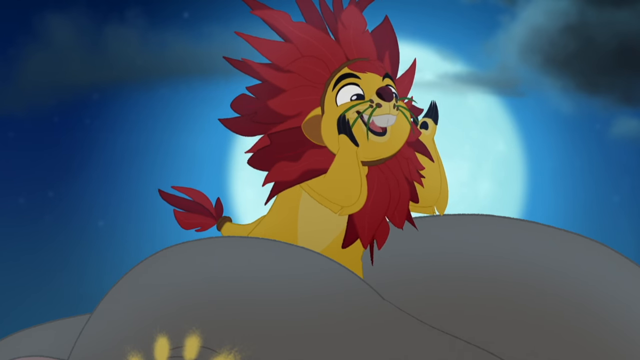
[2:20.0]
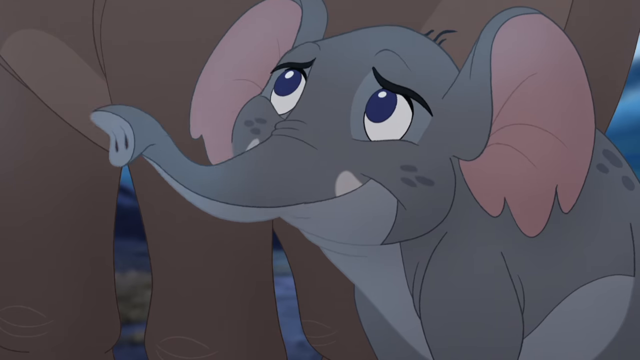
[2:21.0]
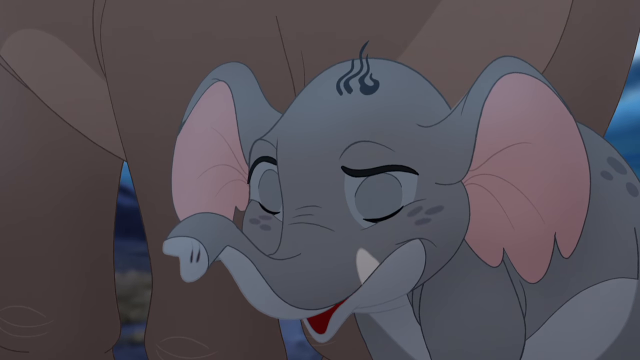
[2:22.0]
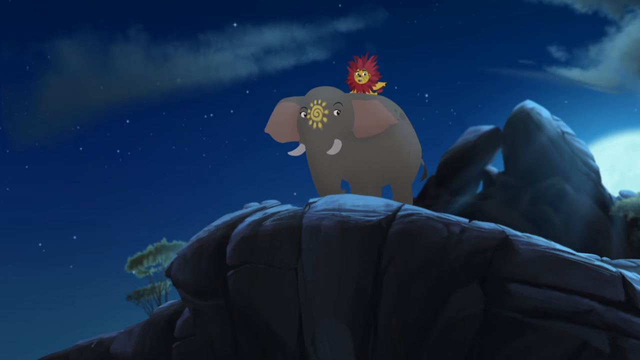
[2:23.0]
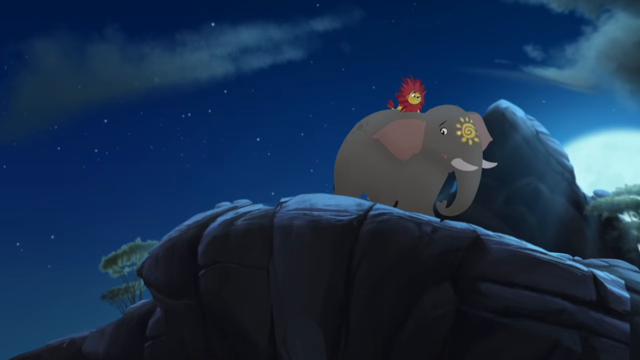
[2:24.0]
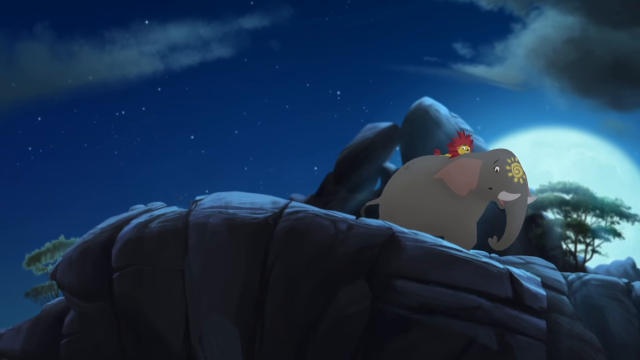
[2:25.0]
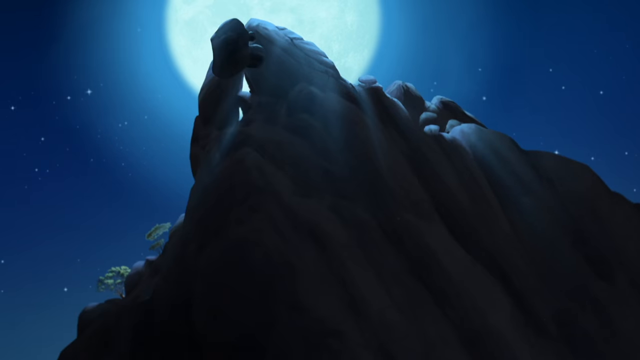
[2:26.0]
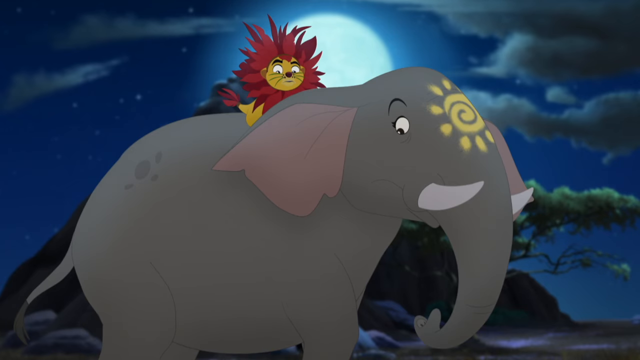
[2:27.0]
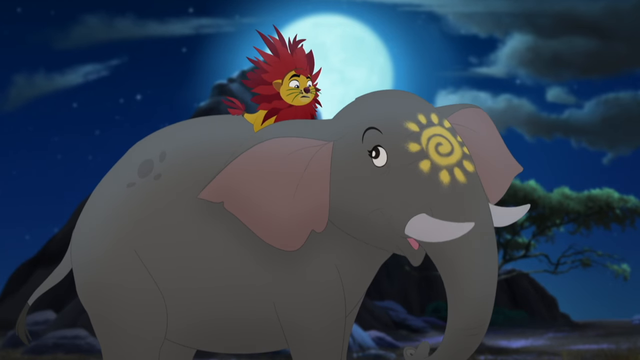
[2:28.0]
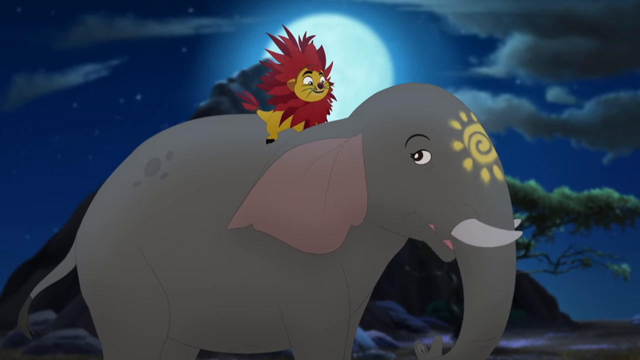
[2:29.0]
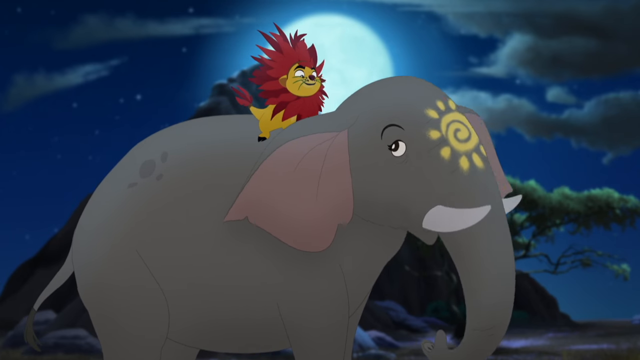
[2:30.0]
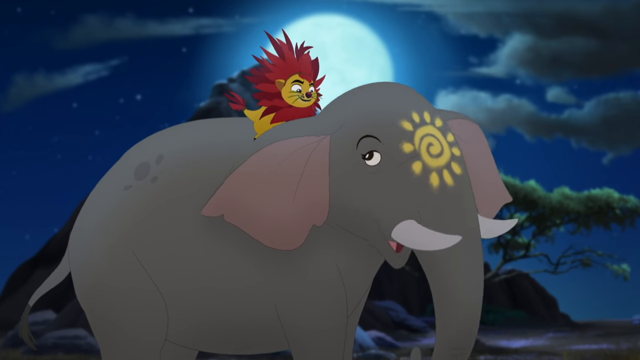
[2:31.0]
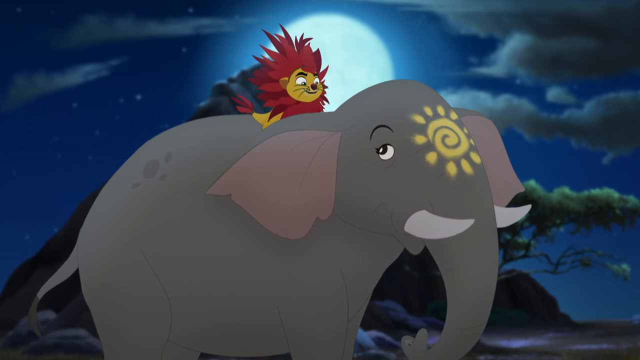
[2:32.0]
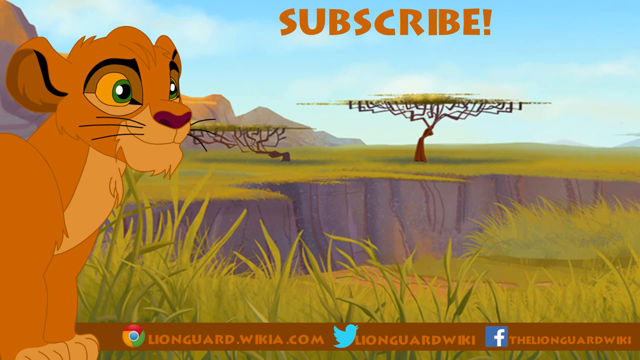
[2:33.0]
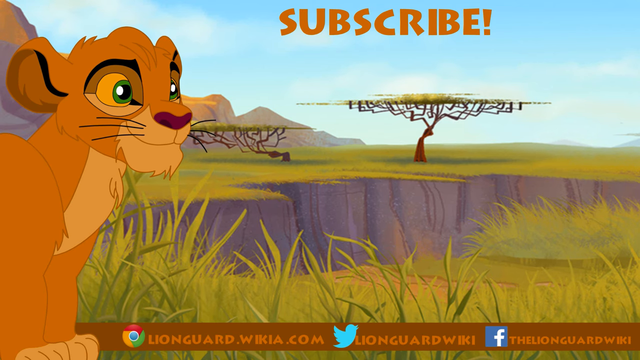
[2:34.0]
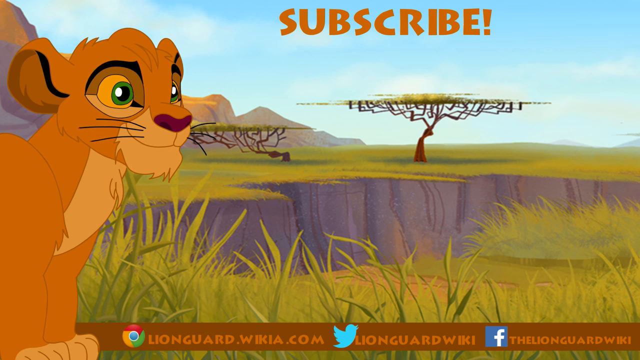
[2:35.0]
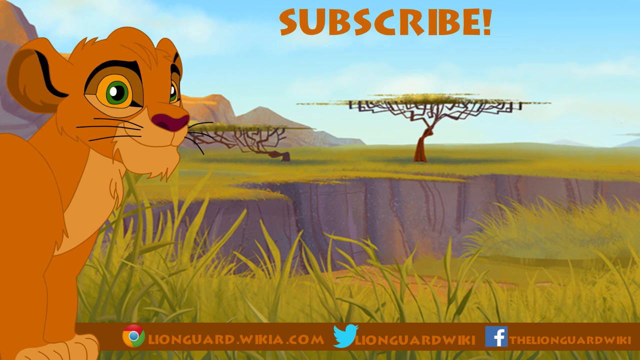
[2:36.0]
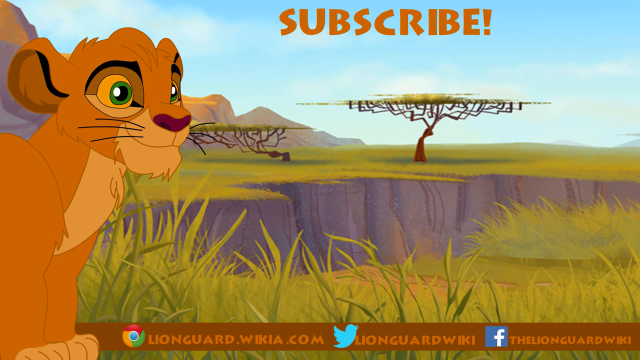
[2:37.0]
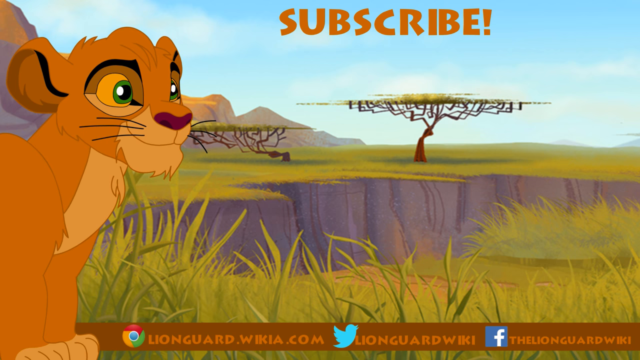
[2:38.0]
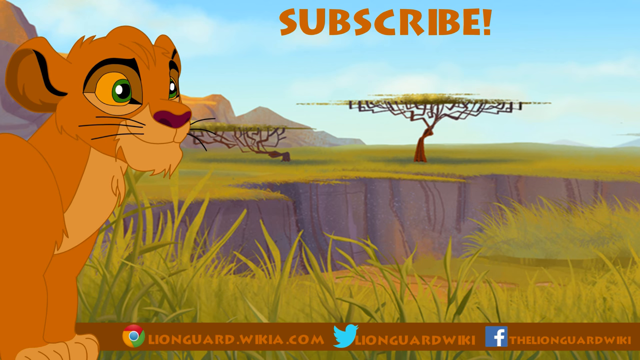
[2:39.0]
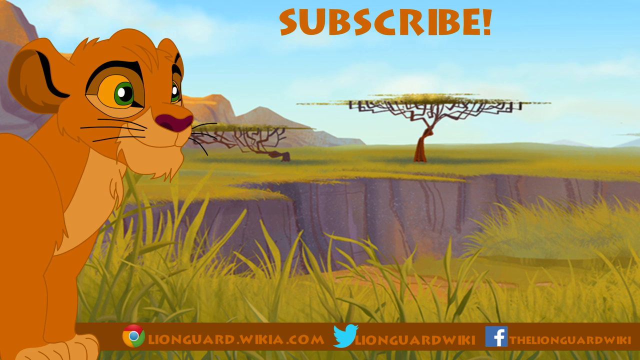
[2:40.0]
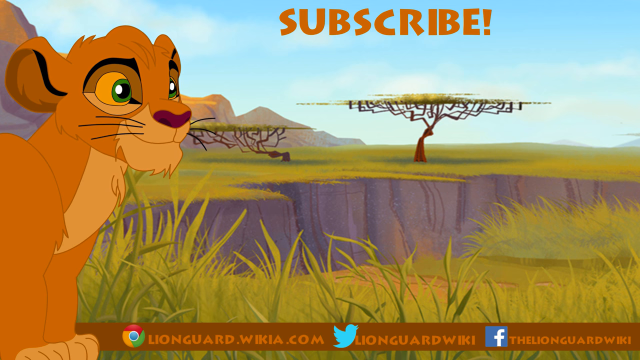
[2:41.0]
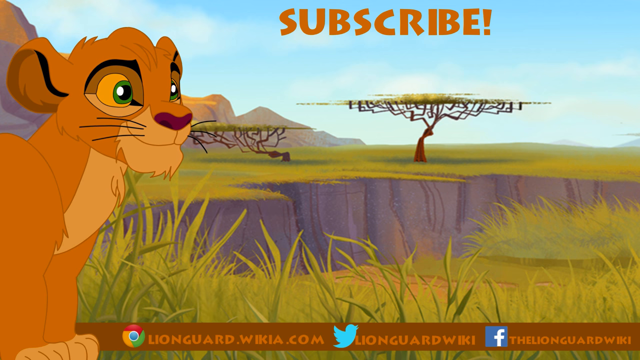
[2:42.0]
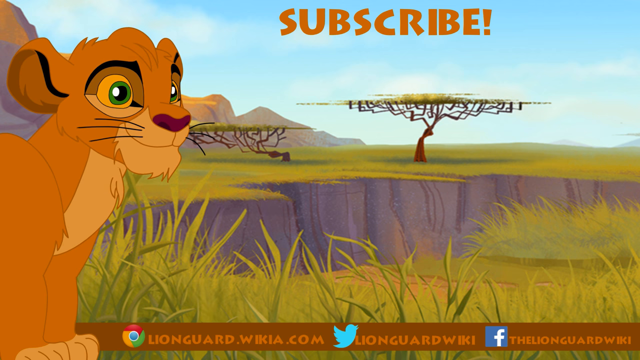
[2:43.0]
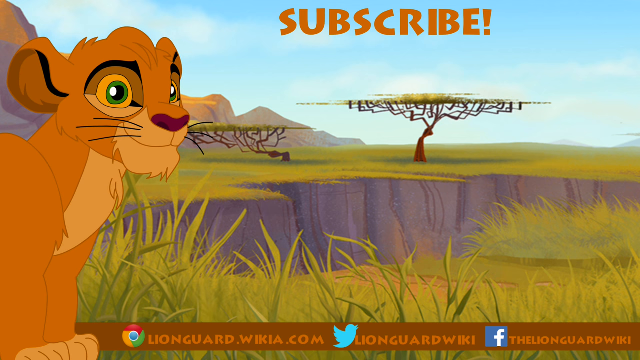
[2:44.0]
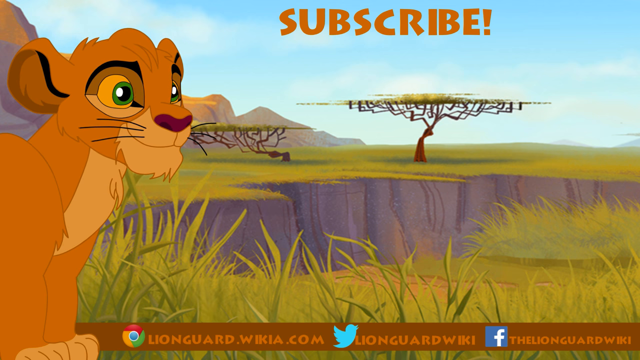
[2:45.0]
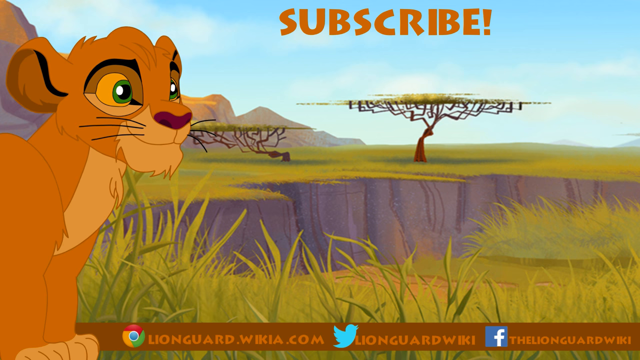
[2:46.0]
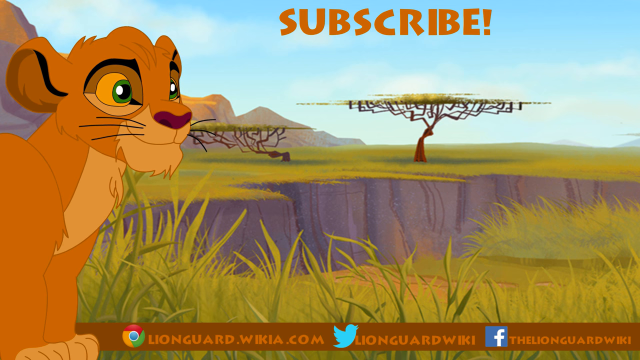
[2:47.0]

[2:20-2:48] A yellow lion that appears to have feathers around its head and on the end of its tail sits on top of an elephant. A moon and some dark gray clouds are in the background behind the lion. The lion talks to someone. All the characters are cartoons. A baby elephant with gray skin, pink ears and blue eyes appears. The big elephant, with the lion on its back, walks away from a cliff, and just as it walks away, the cliff breaks and falls down below. The elephant talks to the lion on its back. This big elephant is also gray, with somewhat faded-looking pink ears and a yellow symbol on its forehead above its trunk between its eyes. A hill or mountain with a green tree with green leaves is in the background. The scene changes to a lion on the left side of the screen; it is orange with green eyes and seems to be on some kind of meadow or plain, with a couple of trees in the background. At the top of the screen, orange letters say "subscribe!"